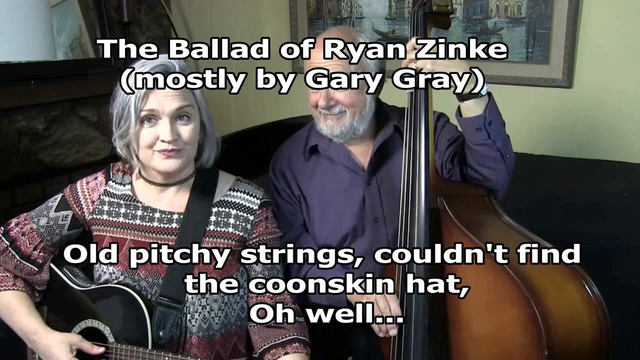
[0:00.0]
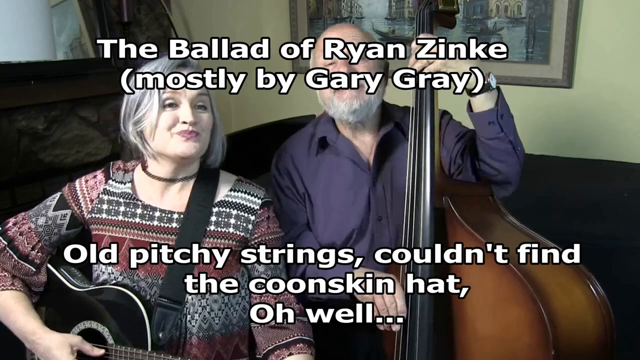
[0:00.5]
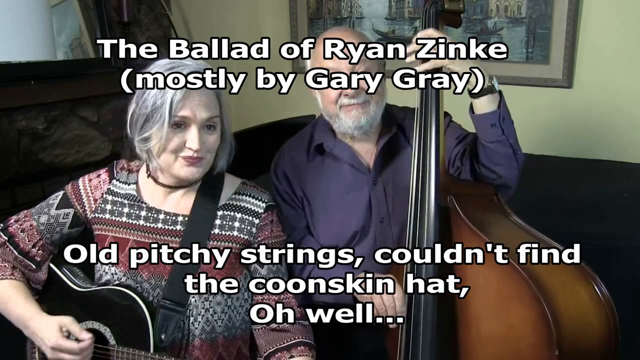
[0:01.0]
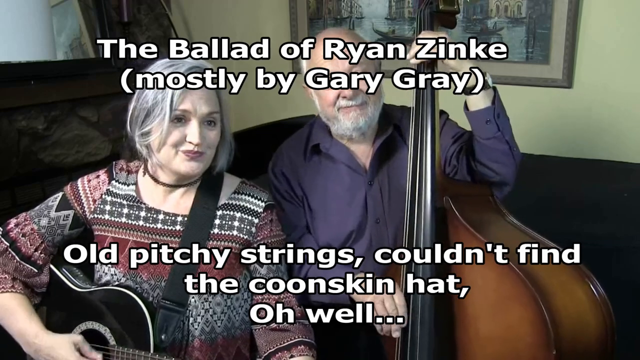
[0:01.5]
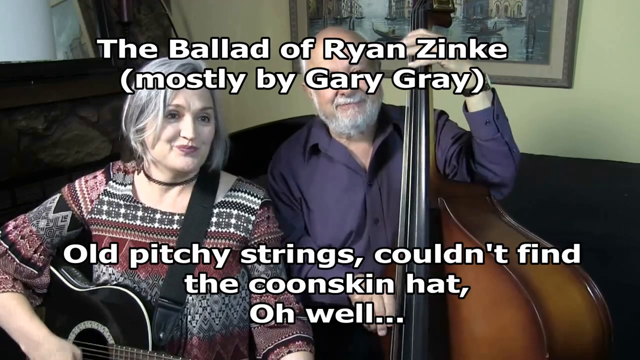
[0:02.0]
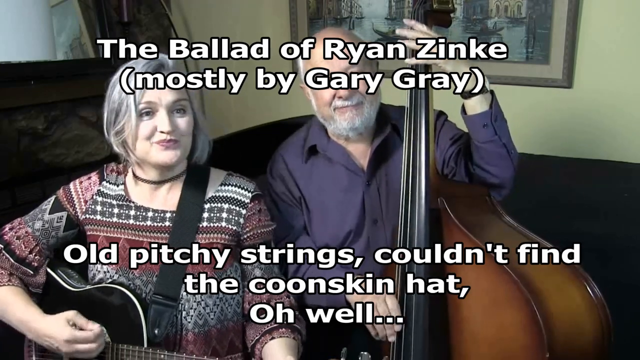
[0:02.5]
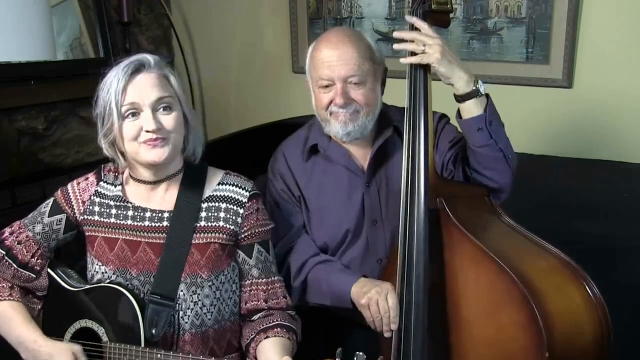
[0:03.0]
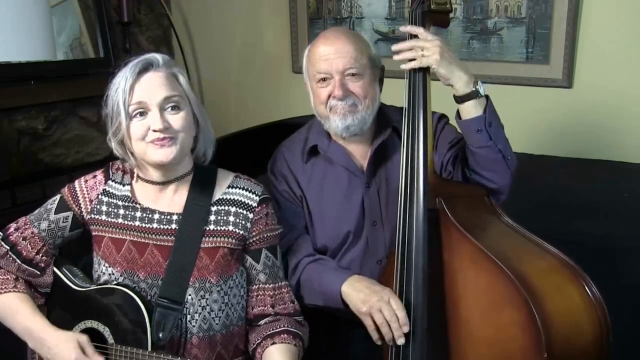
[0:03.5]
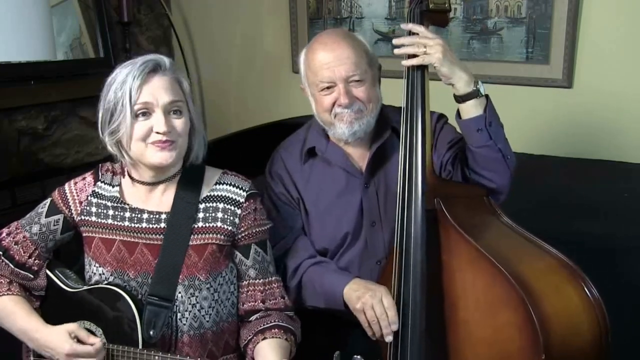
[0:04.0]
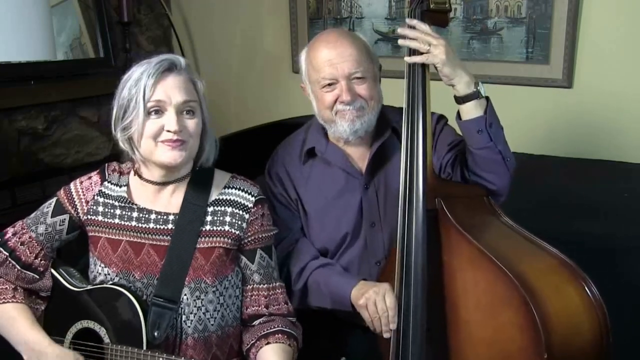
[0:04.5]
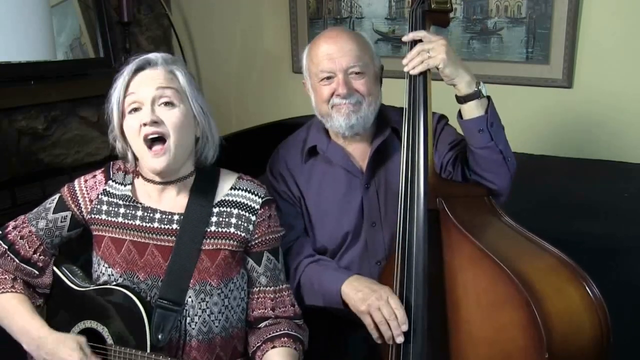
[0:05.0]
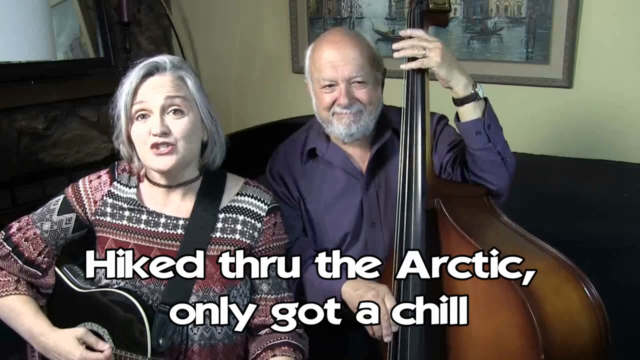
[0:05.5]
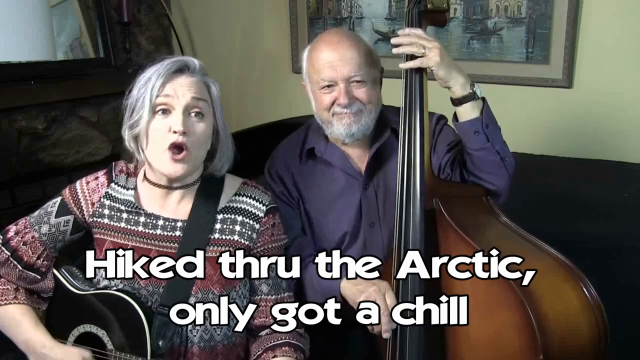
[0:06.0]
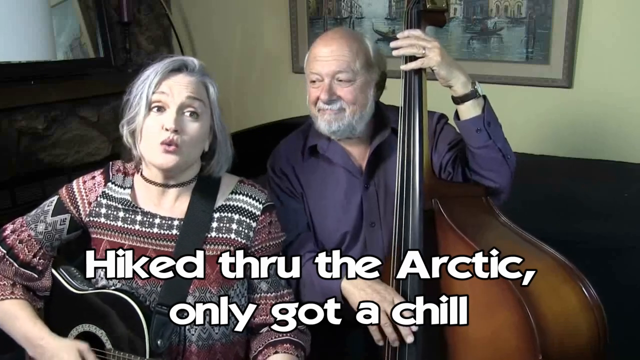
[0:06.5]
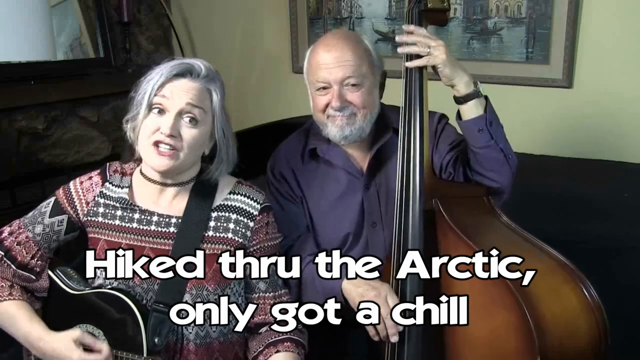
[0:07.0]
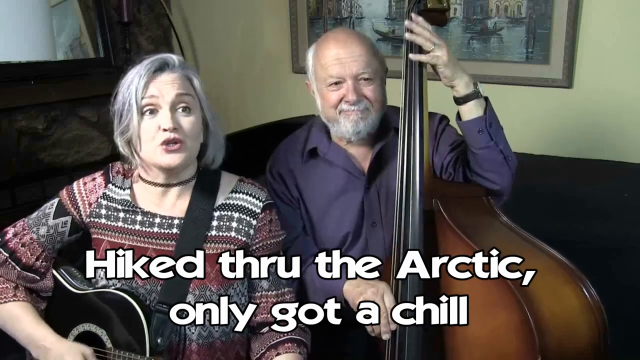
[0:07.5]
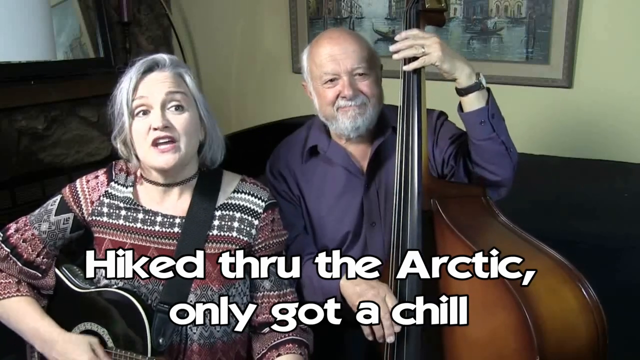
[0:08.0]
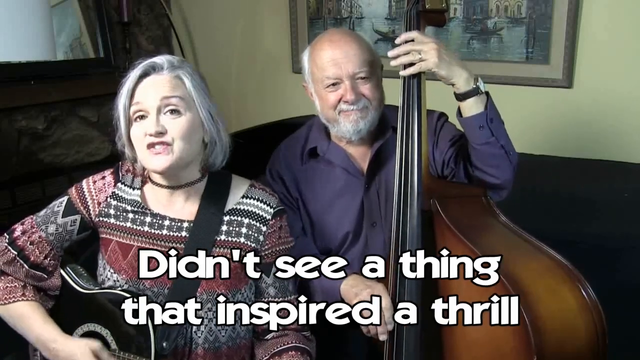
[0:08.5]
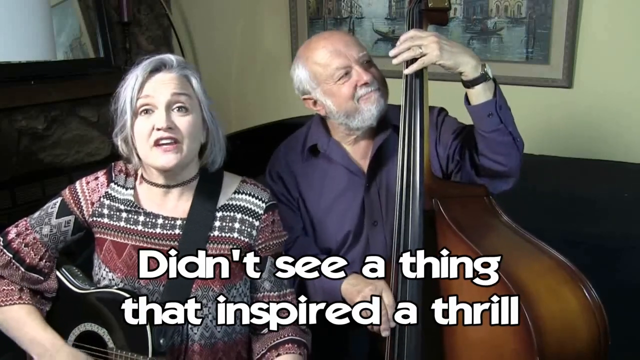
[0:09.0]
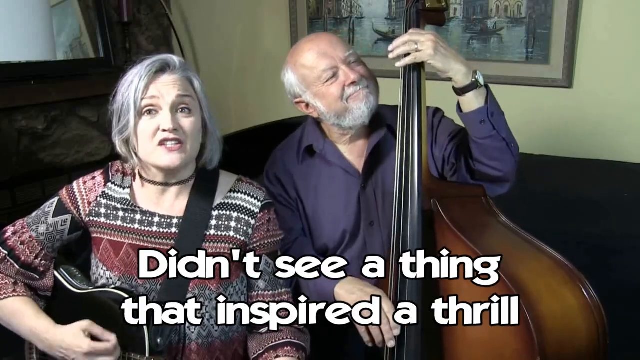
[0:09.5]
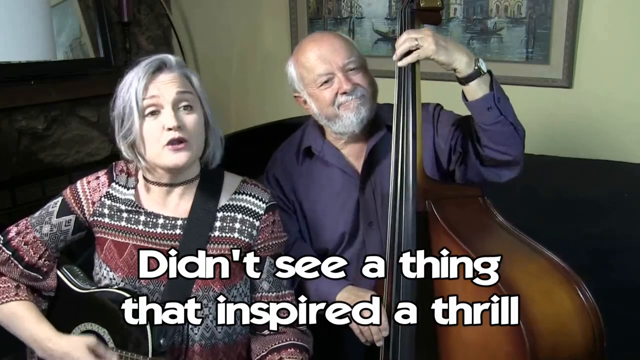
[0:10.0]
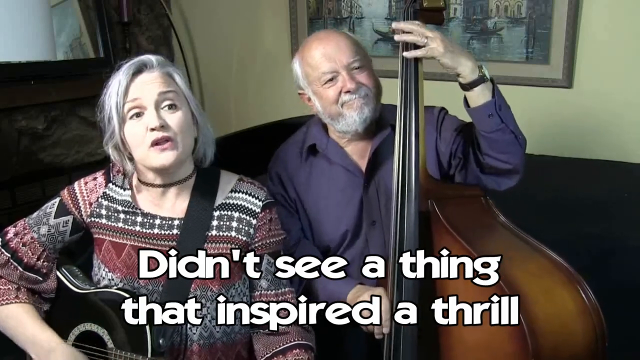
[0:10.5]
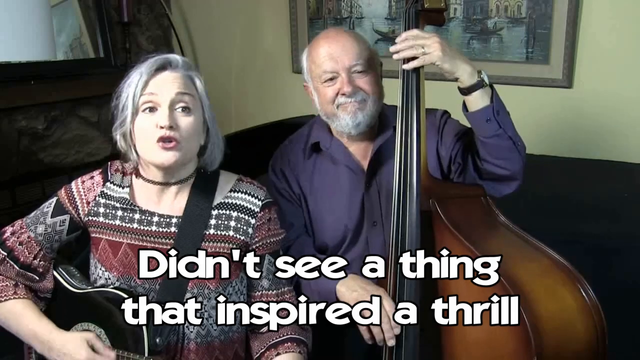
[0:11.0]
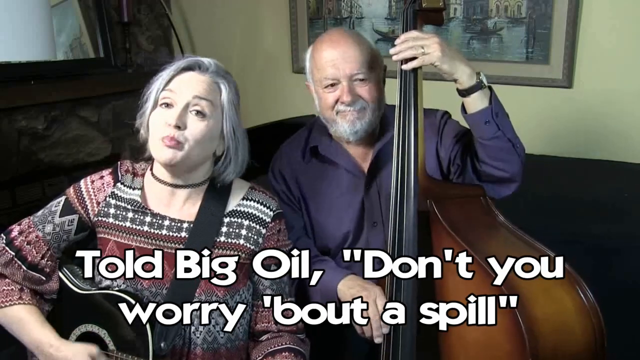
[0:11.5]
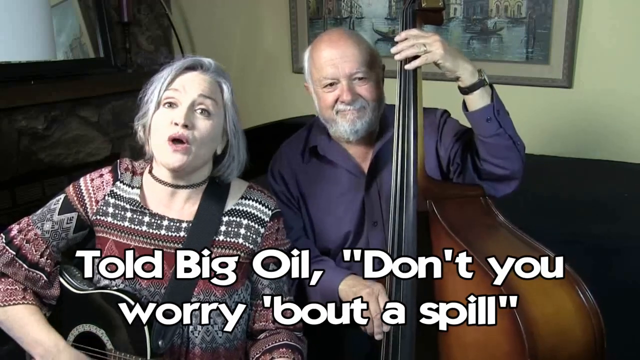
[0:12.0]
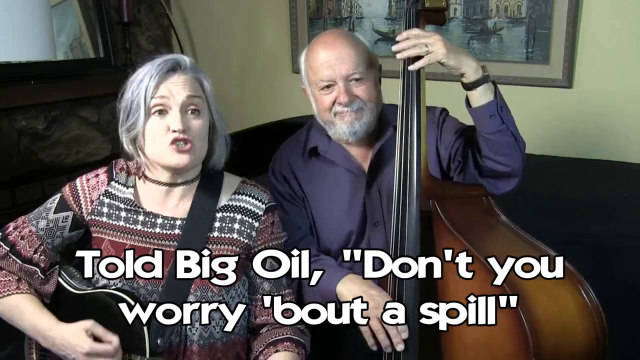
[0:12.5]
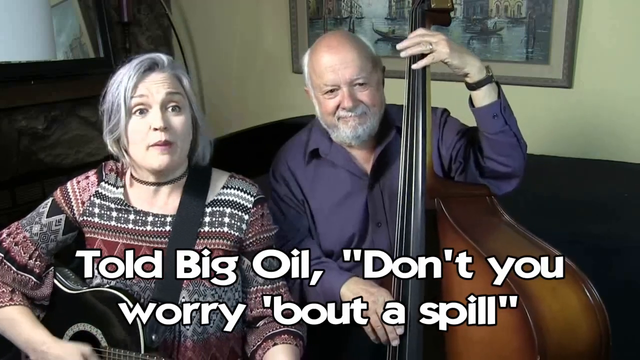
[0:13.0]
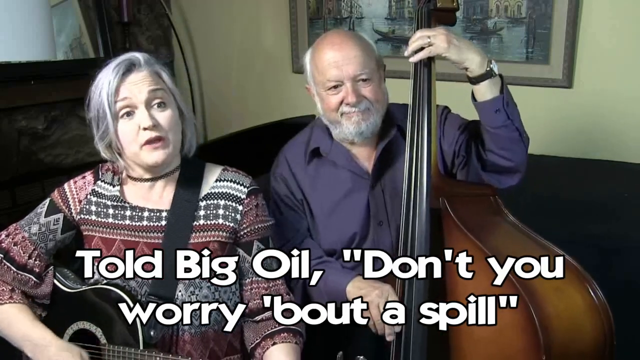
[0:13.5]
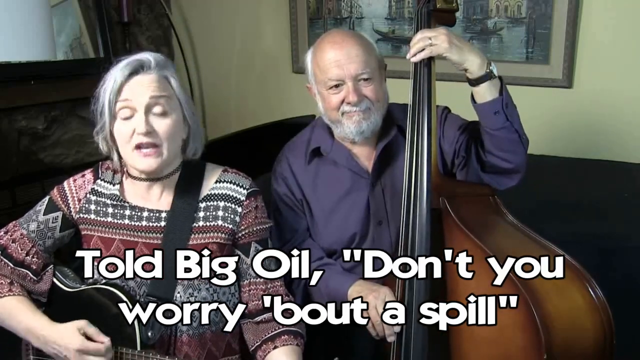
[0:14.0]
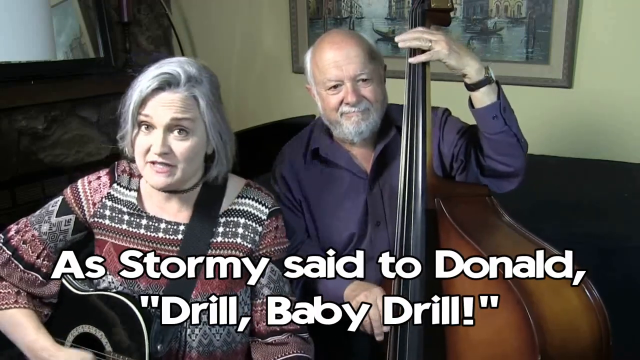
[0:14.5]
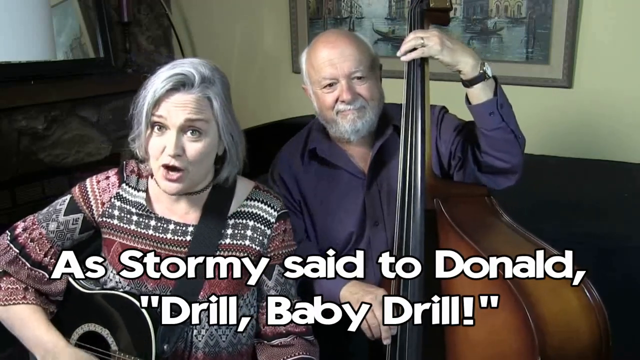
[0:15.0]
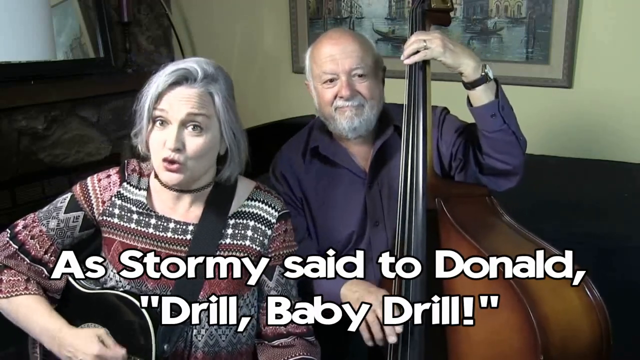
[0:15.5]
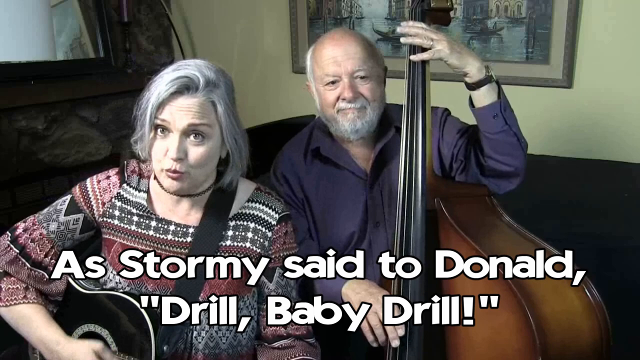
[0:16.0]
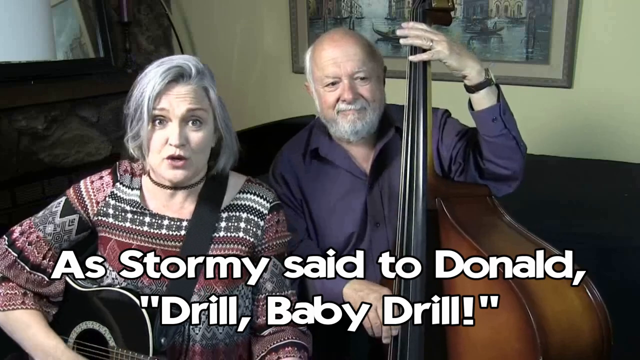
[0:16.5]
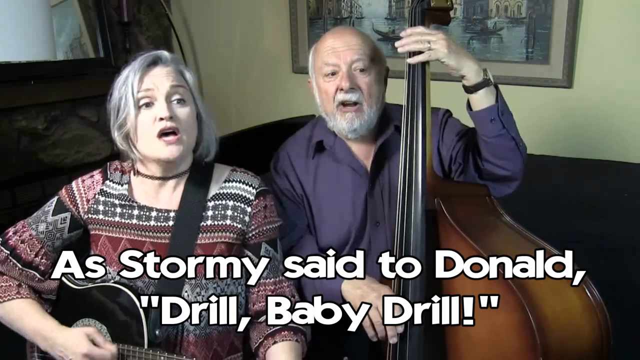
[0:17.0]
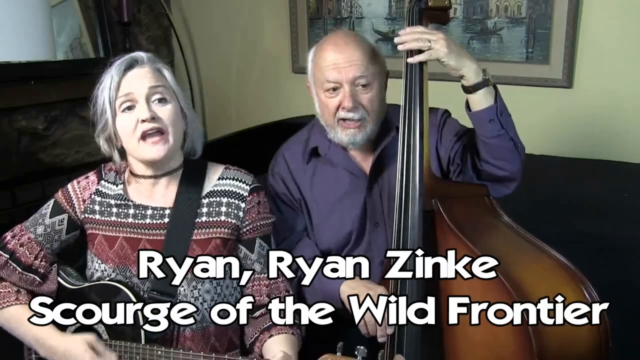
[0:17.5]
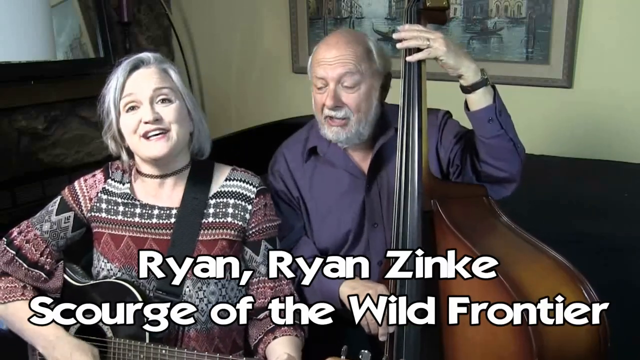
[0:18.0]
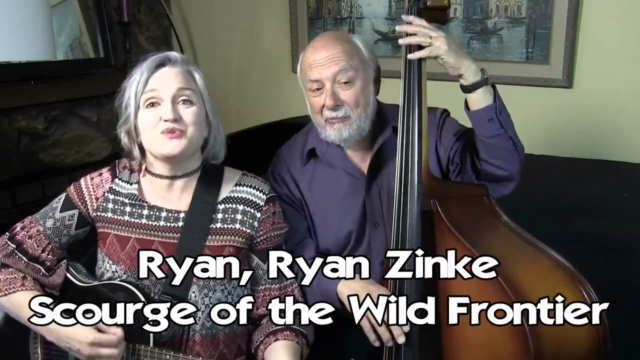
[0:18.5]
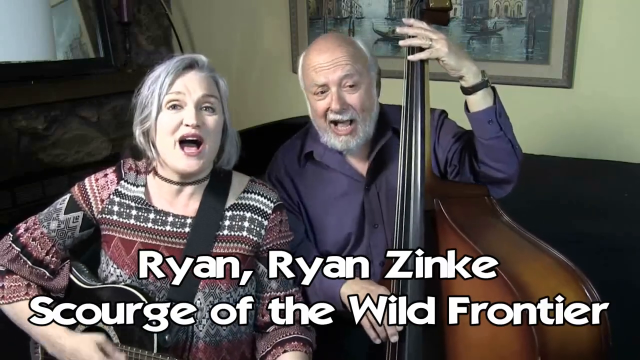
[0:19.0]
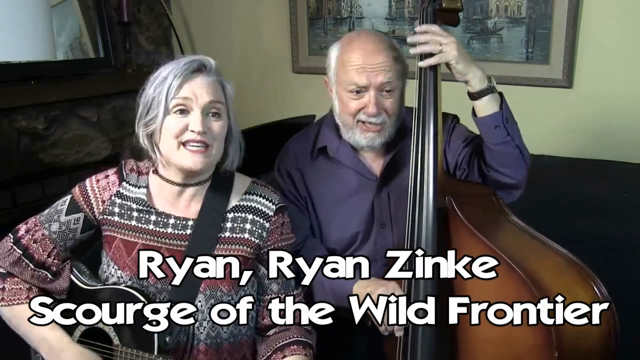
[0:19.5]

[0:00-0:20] Two older people, a woman and a man who seem to be in their late 50s to 60s, sing and play instruments. The woman sings and plays guitar, and the man plays a stand-up bass. White subtitles at the bottom of the video show what they are singing. The song's title is The Ballad of Ryan Zinke, with "mostly by Gary Gray" in parentheses. They are in a room that looks to be a living room, apparently with 80s-to-90s decor, a wall that looks cream teal, and a picture on the wall. The man wears a lavender button-down shirt. The woman has gray hair and a necklace and wears a multicolored patterned shirt, kind of like a New Mexico Albuquerque pattern. The first subtitles read "Old pitchy strings couldn't find the coonskin hat oh well".